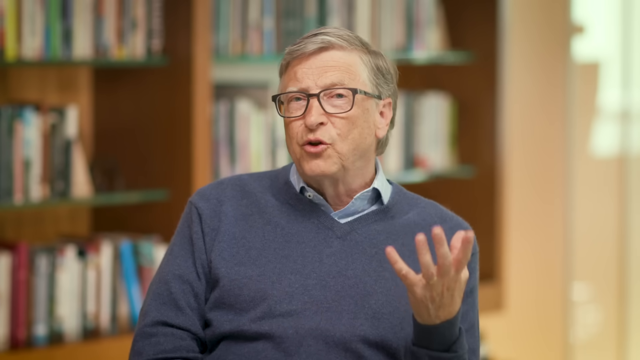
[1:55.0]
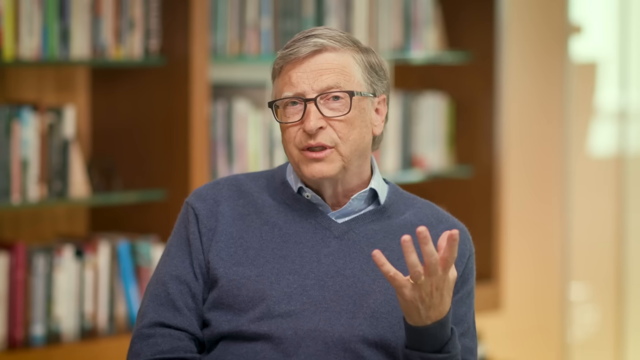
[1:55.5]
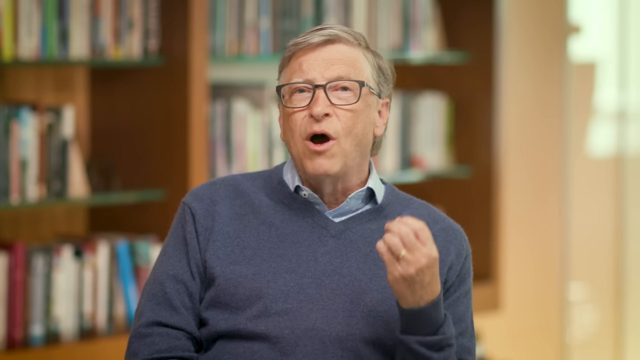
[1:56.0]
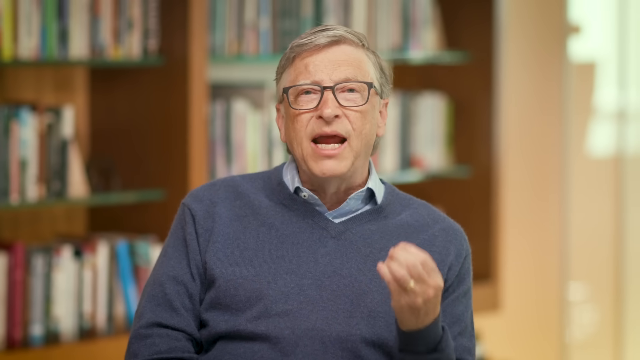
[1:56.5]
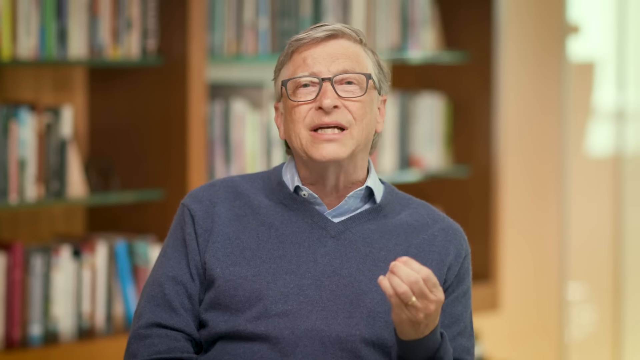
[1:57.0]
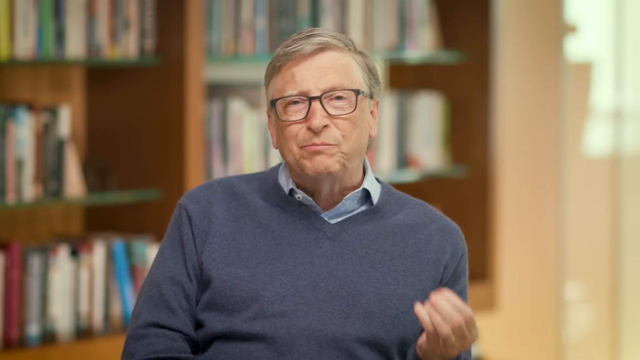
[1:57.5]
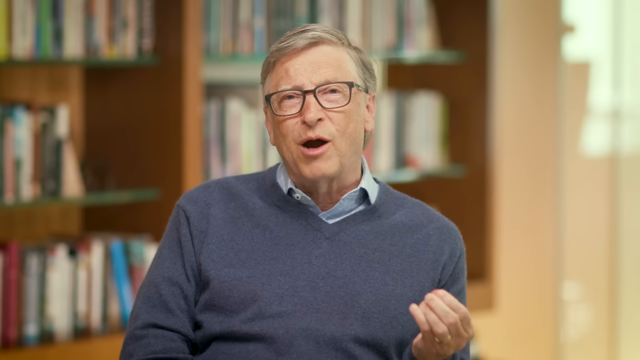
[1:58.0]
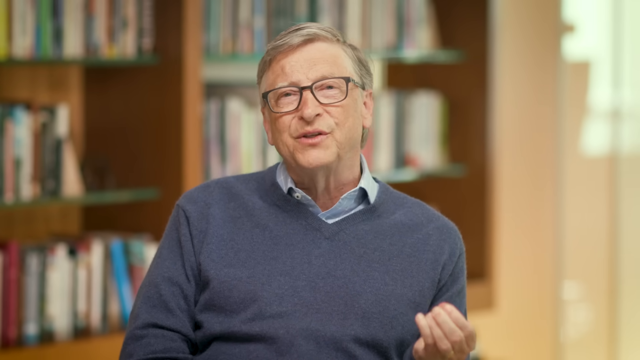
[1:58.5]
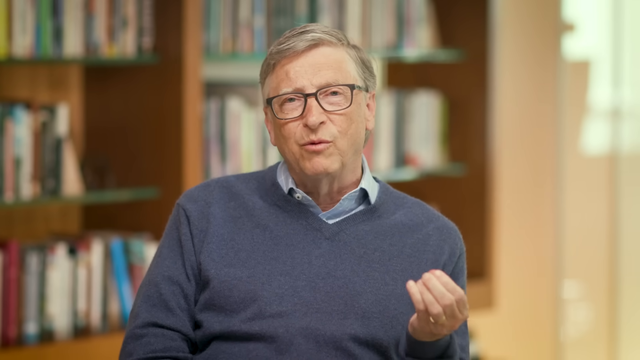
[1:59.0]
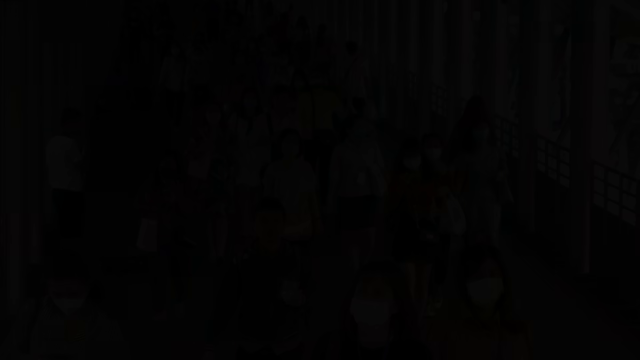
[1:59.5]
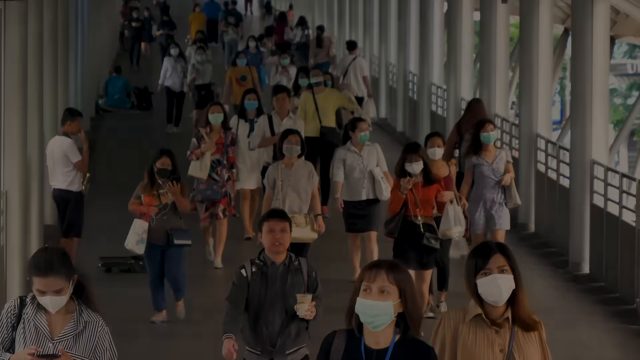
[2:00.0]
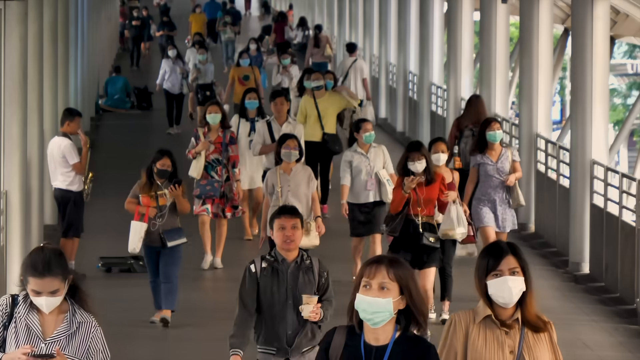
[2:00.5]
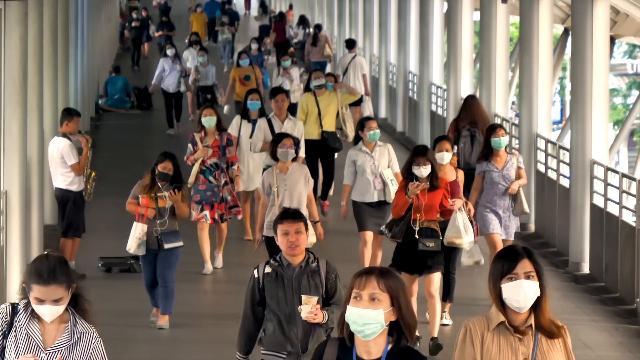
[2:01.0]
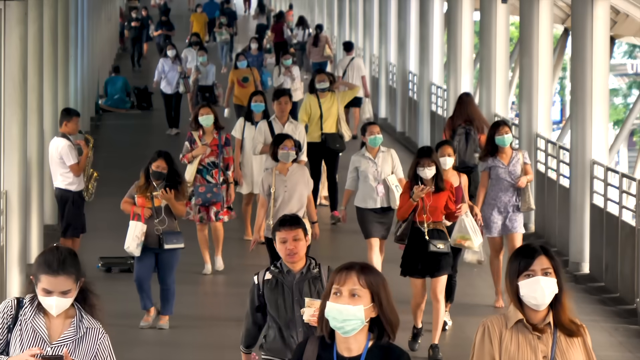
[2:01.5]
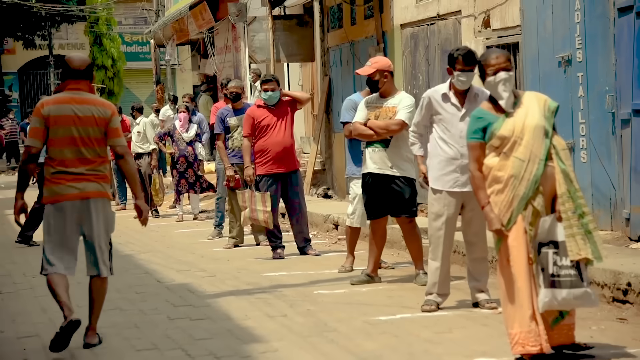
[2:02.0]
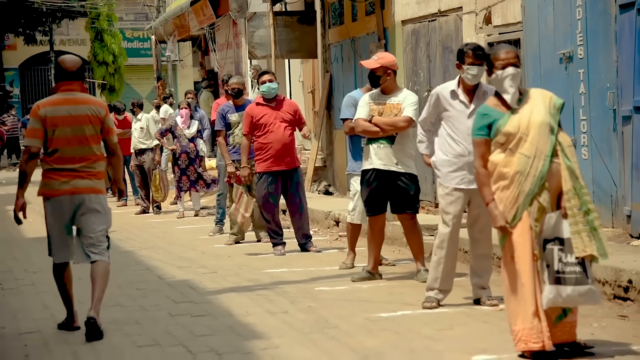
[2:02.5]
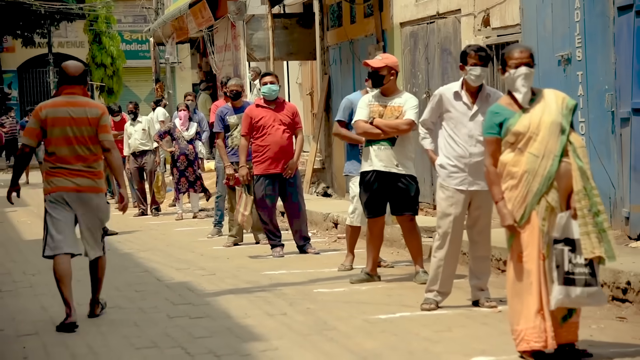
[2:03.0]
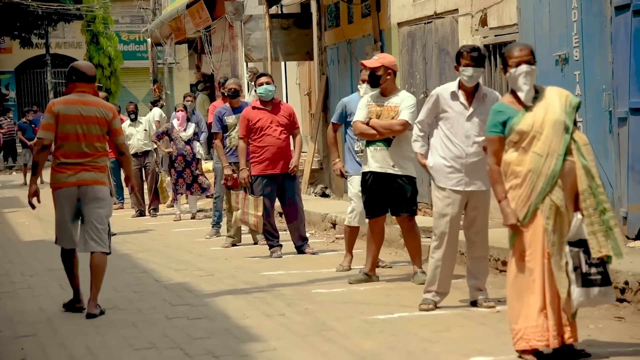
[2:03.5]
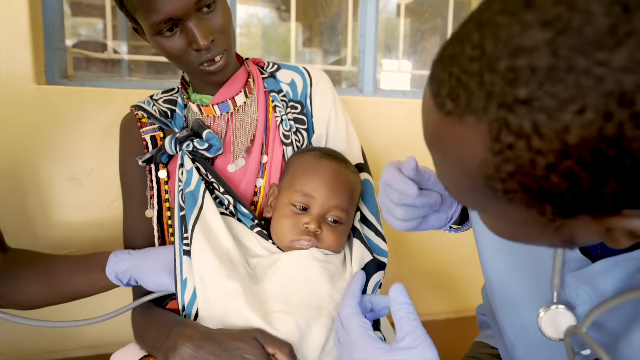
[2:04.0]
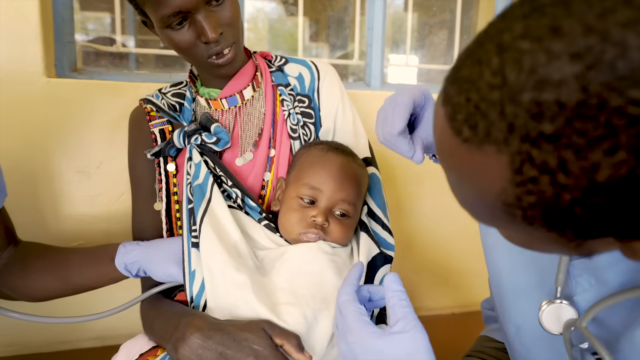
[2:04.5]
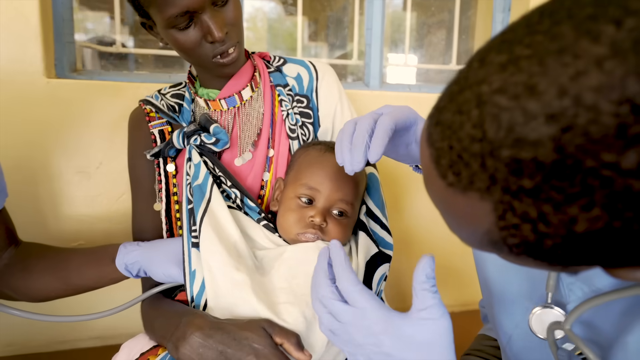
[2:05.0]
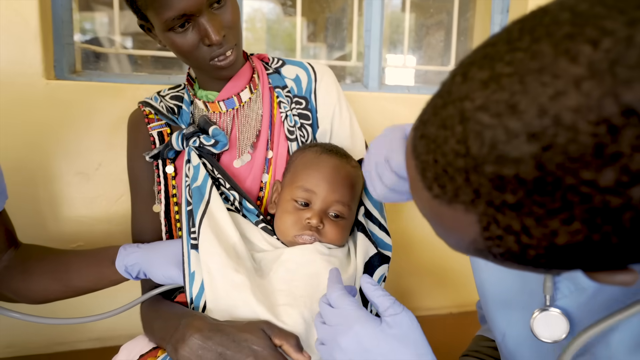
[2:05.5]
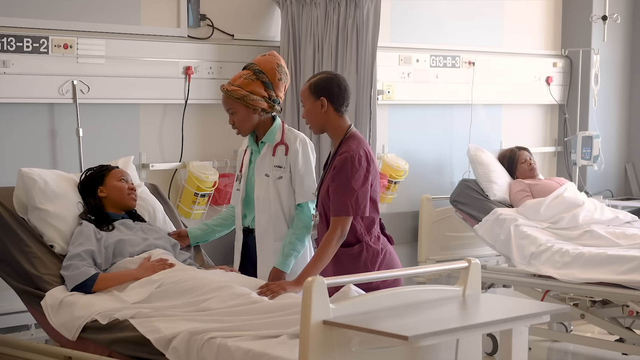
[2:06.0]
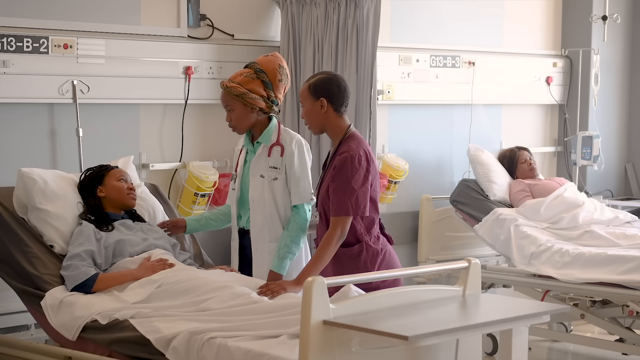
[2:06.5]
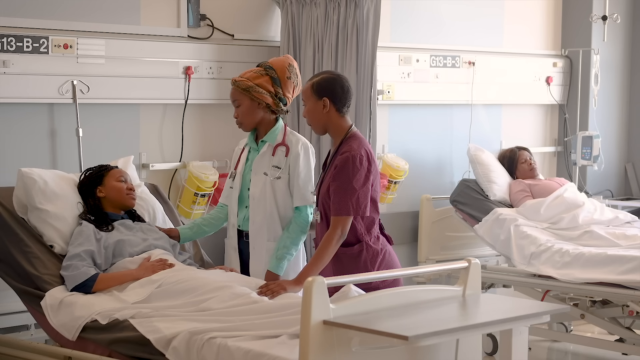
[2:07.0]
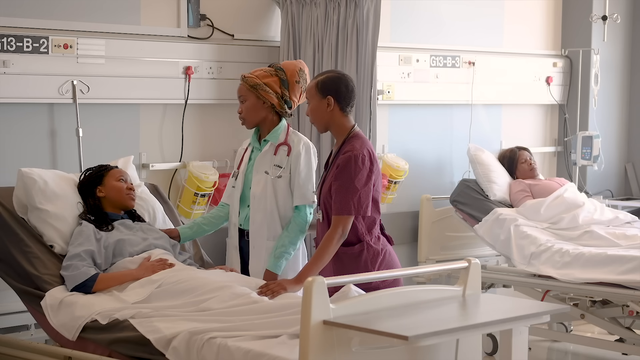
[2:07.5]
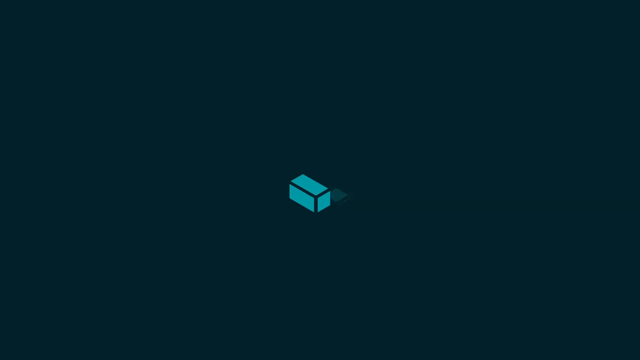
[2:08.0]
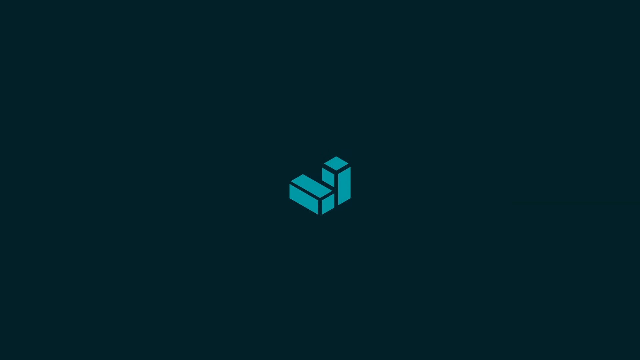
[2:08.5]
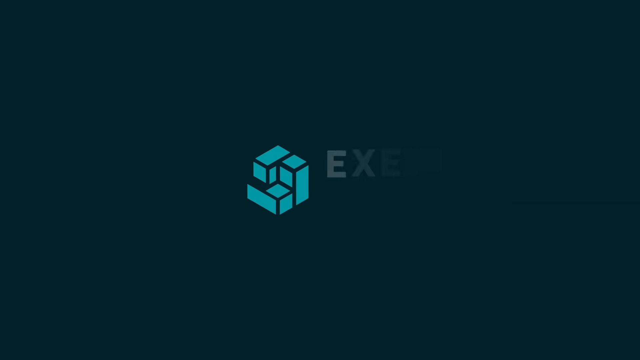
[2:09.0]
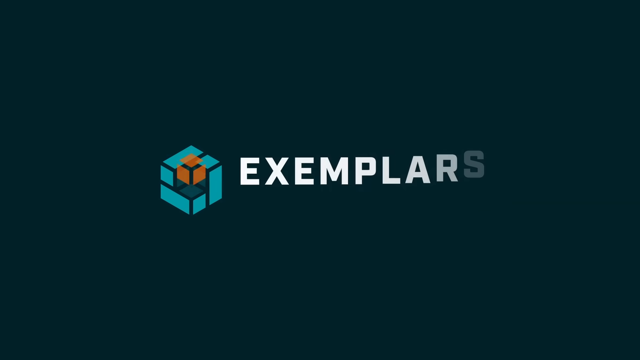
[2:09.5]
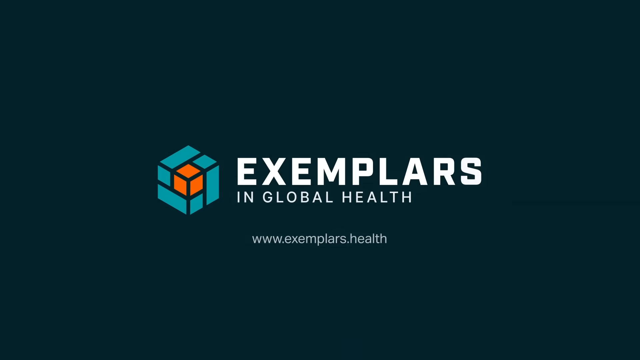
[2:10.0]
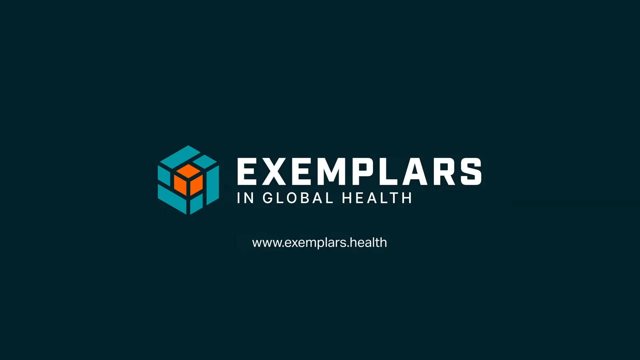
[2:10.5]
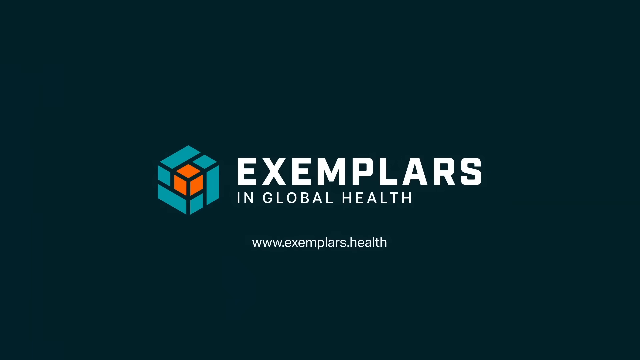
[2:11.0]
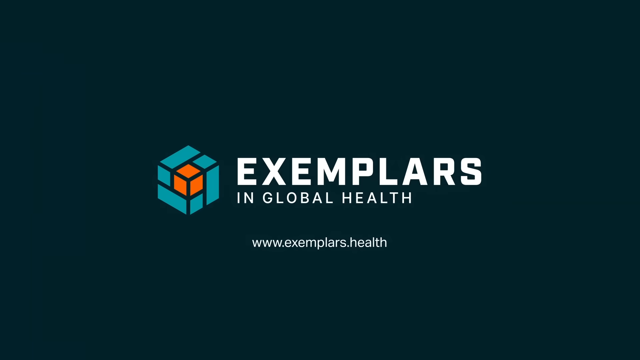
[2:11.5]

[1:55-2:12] An elderly white man sits in a room with a bookshelf behind him, presenting towards the camera. The video pans to footage of a group of people walking through a walkway; 90% of them wear face masks, and they appear to be of Asian heritage. Another outdoor scene shows people queuing in a line along a street, with white markings on the ground, apparently to keep distance between each person in the queue; the people wear face masks. Next, a woman has a young baby strapped to her, and the baby is tended to by a doctor wearing blue latex gloves. Then a woman, maybe in her 30s, lies in a hospital bed, tended to by a doctor and a nurse, with another woman in the bed next to her. An outro shows a dark blue background with the text "Exemplars in Global Health".